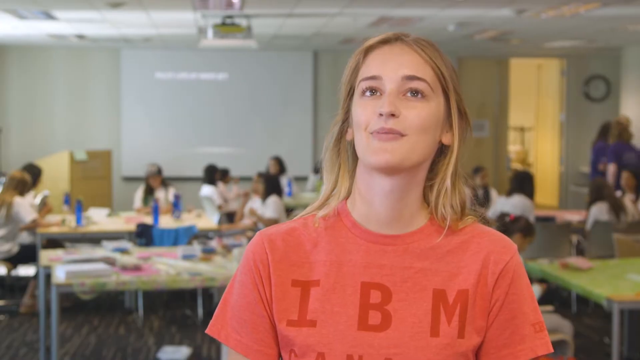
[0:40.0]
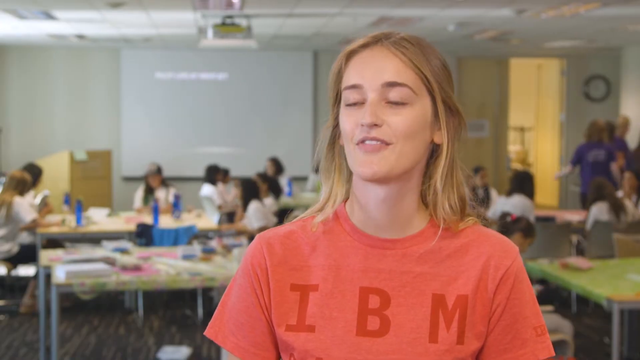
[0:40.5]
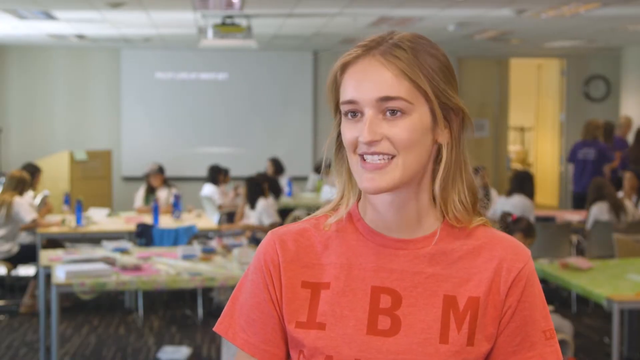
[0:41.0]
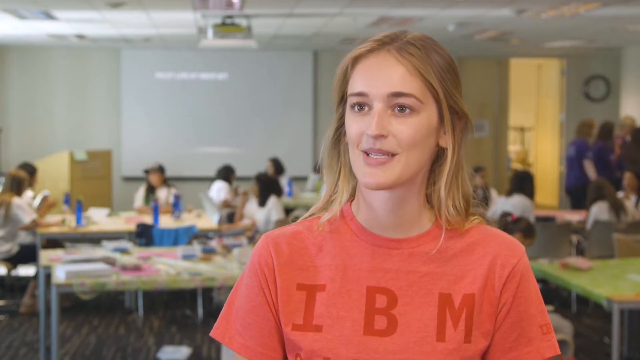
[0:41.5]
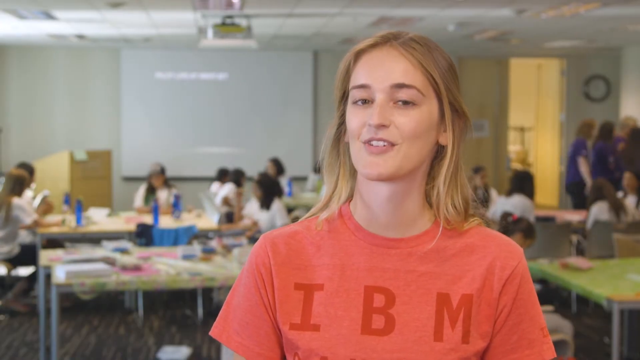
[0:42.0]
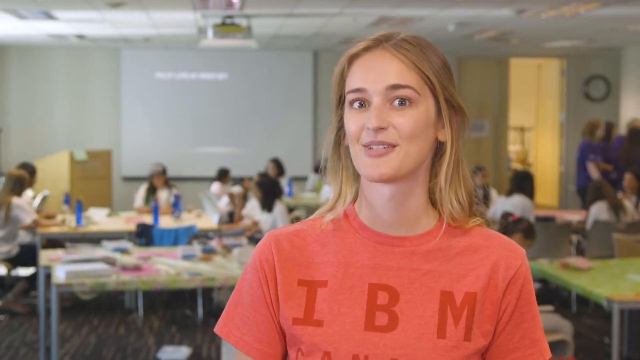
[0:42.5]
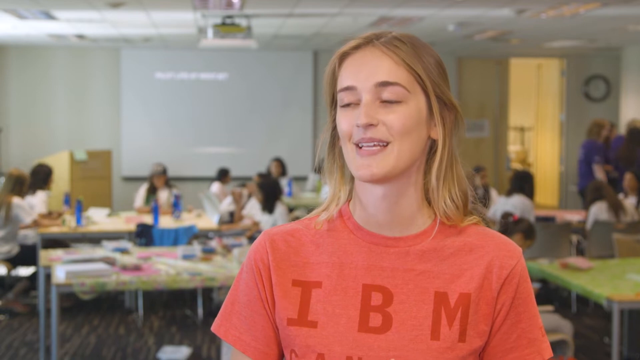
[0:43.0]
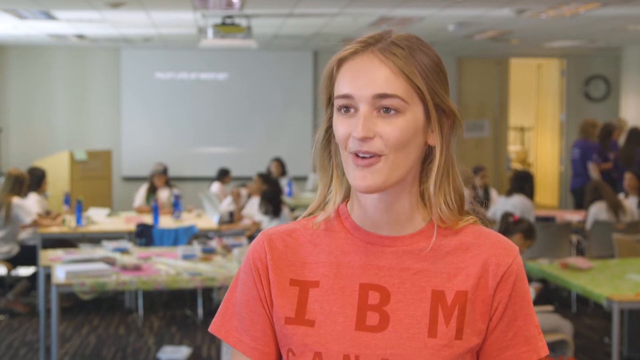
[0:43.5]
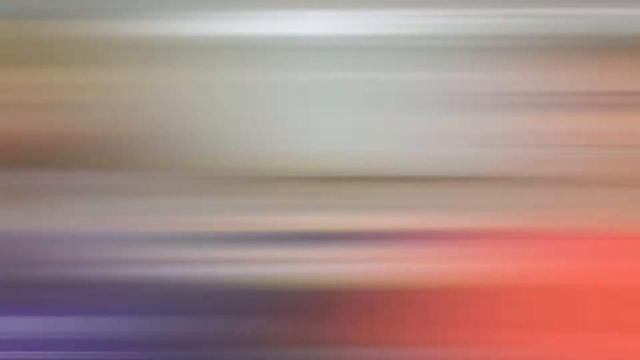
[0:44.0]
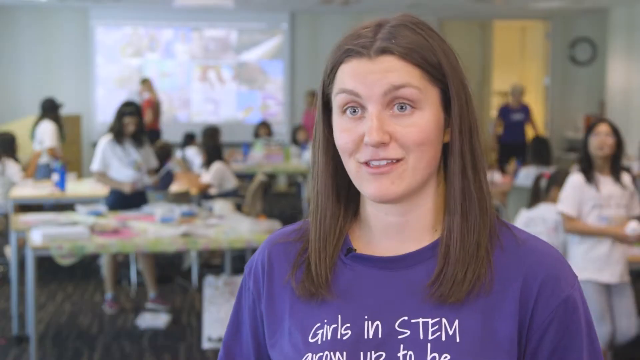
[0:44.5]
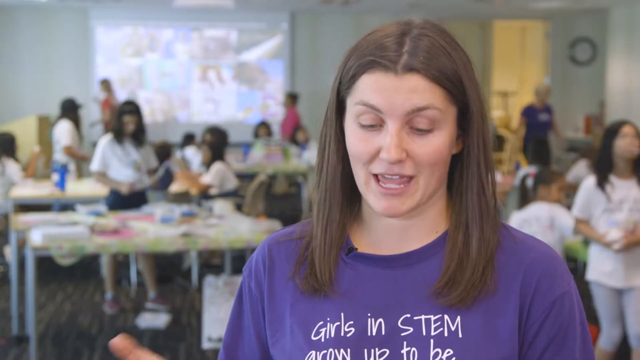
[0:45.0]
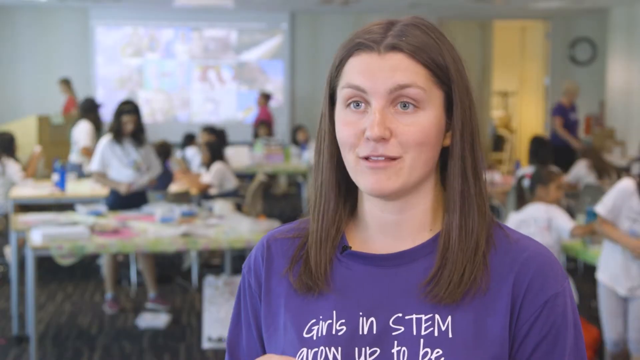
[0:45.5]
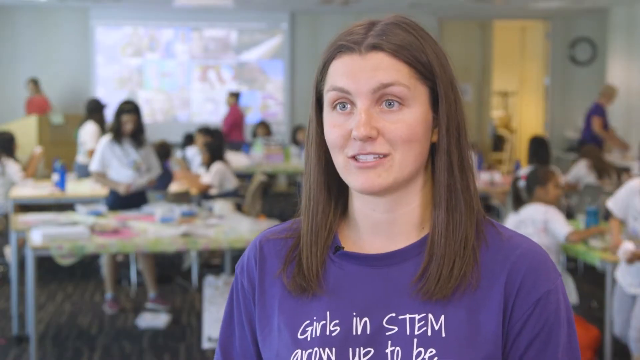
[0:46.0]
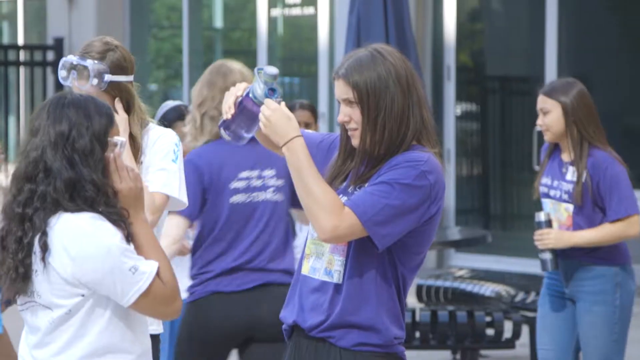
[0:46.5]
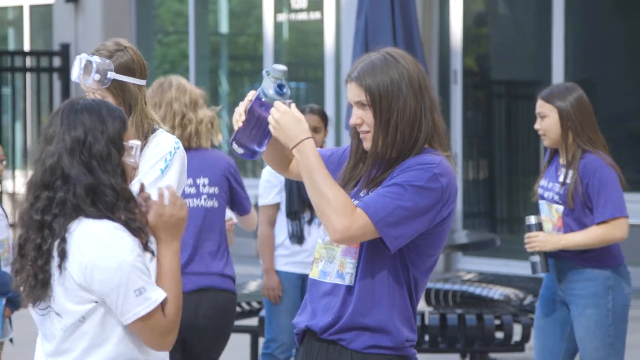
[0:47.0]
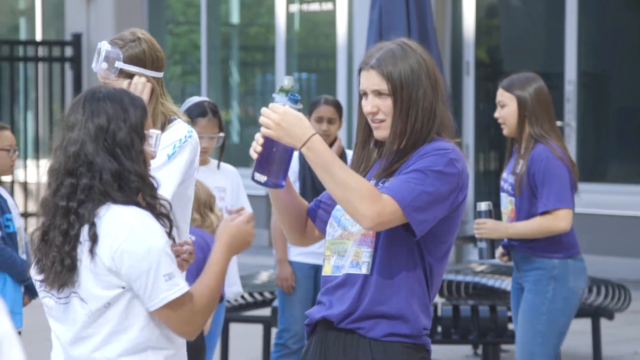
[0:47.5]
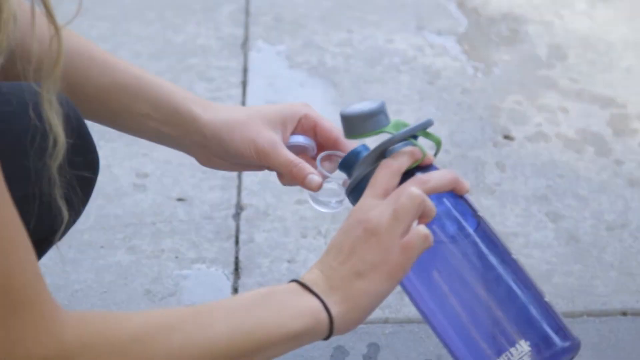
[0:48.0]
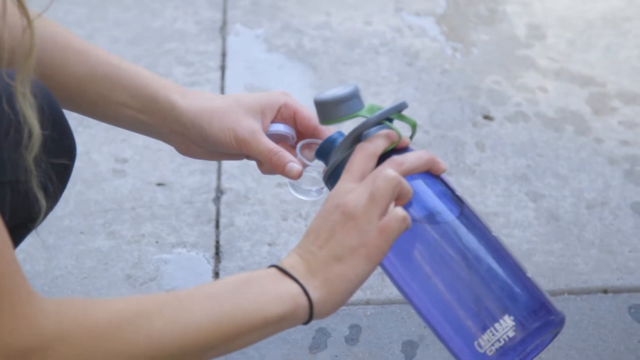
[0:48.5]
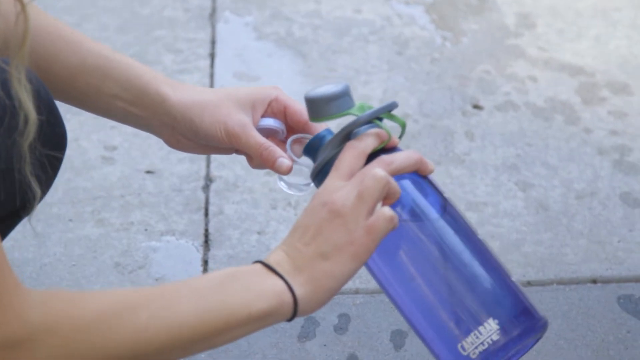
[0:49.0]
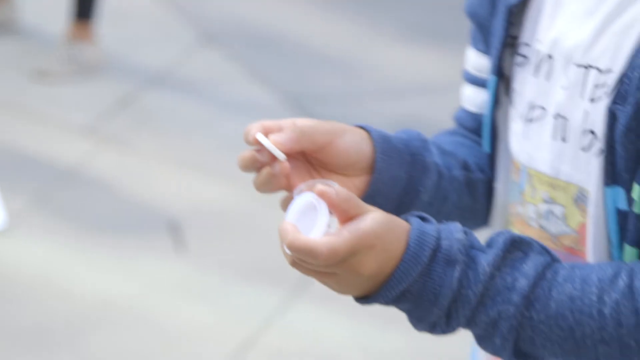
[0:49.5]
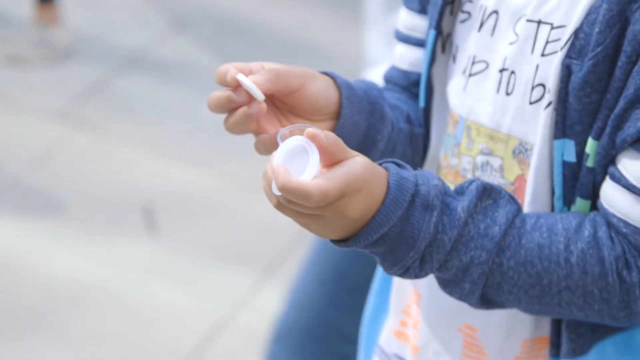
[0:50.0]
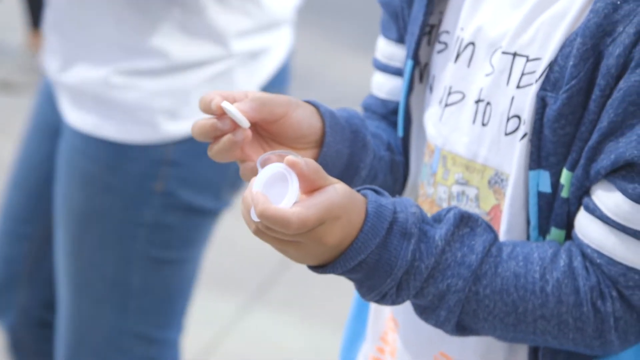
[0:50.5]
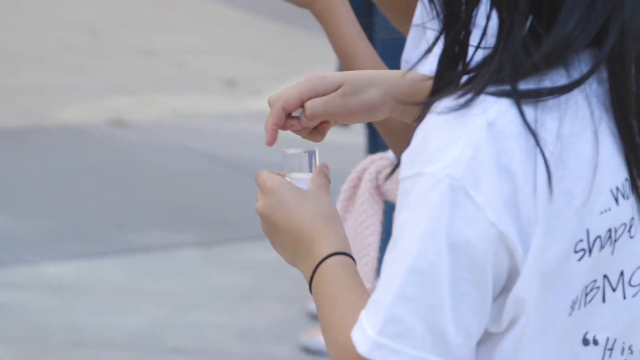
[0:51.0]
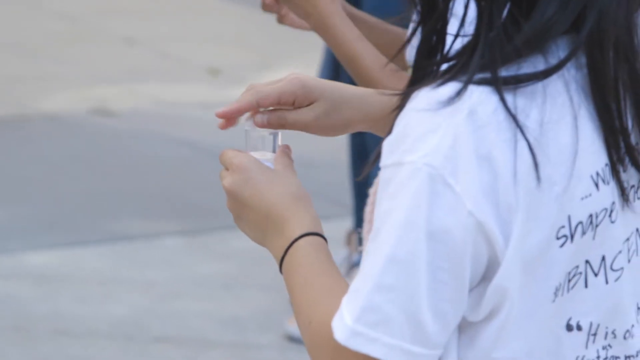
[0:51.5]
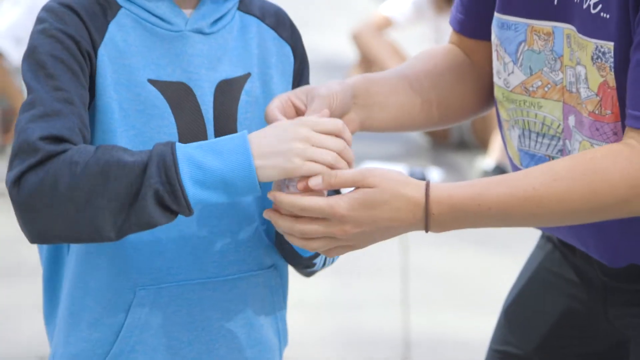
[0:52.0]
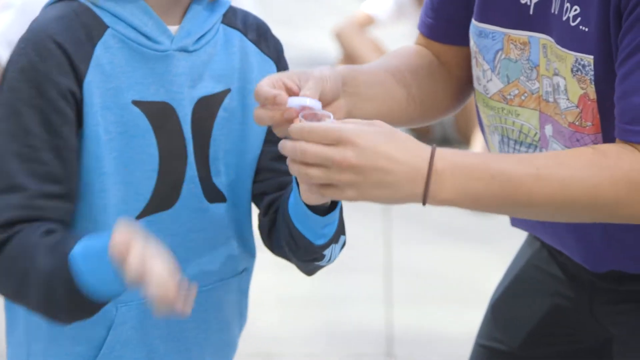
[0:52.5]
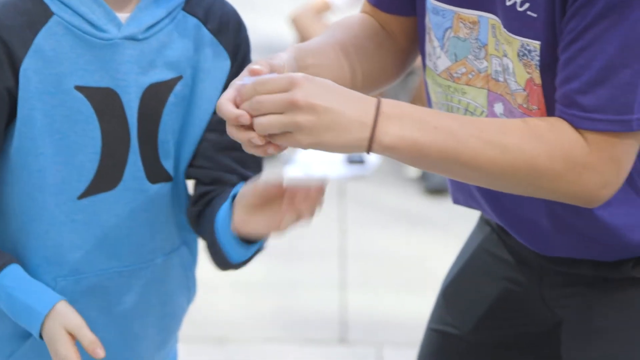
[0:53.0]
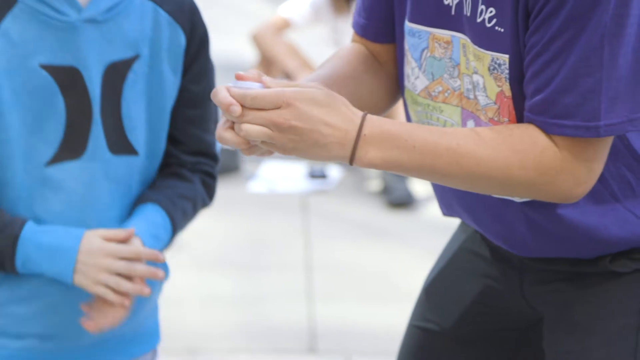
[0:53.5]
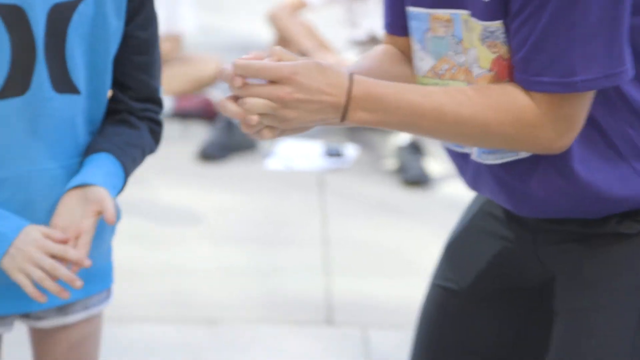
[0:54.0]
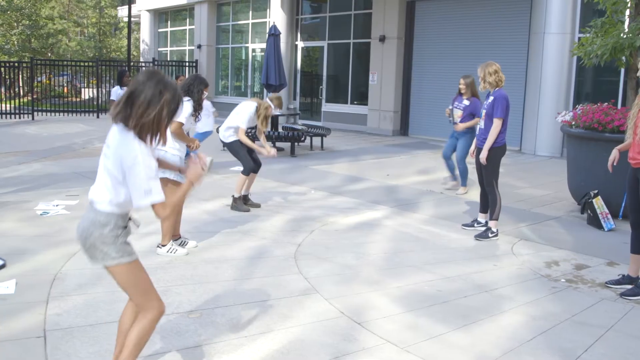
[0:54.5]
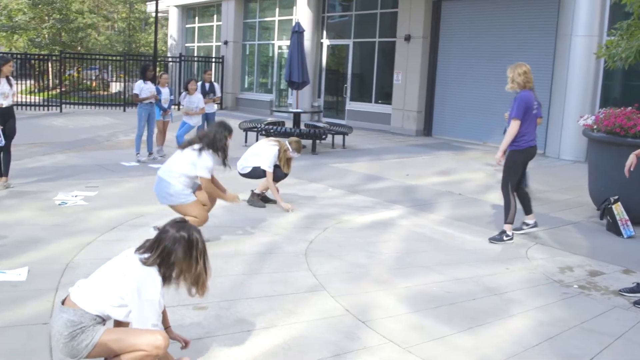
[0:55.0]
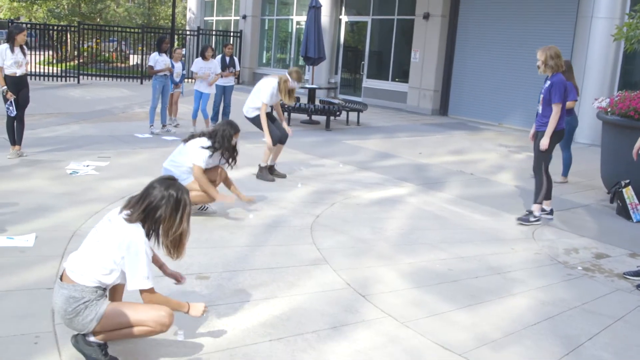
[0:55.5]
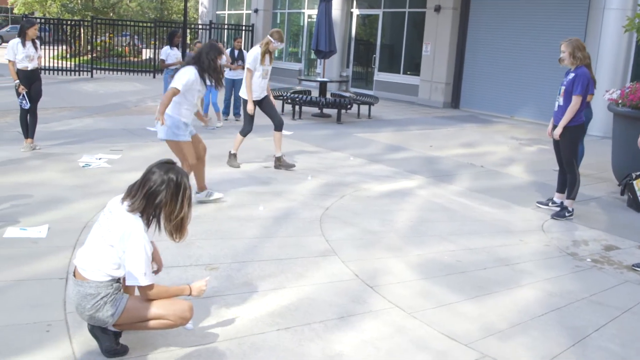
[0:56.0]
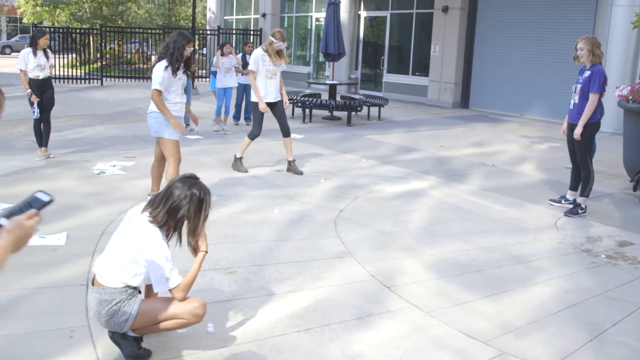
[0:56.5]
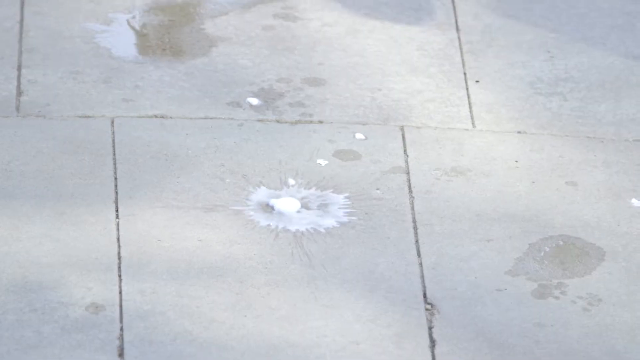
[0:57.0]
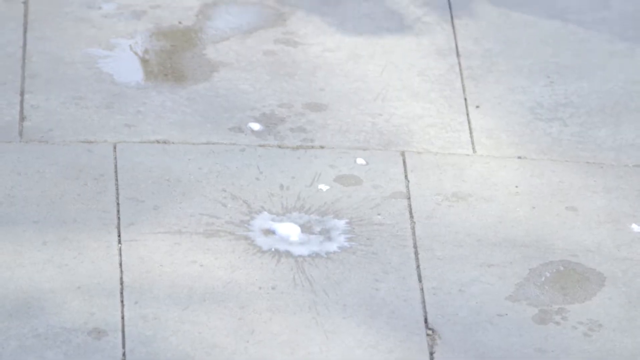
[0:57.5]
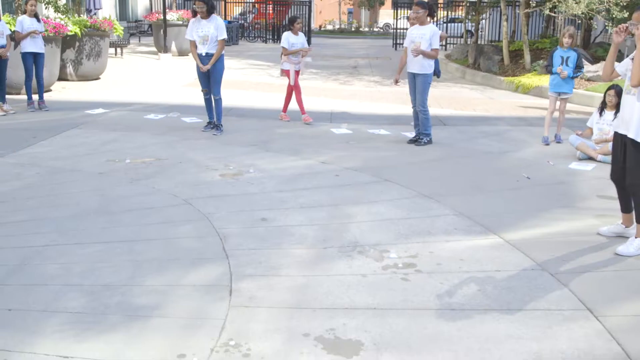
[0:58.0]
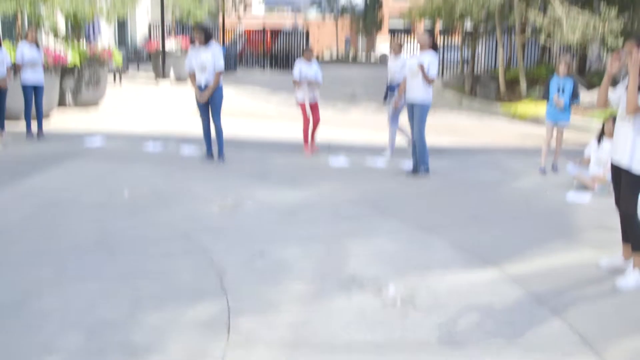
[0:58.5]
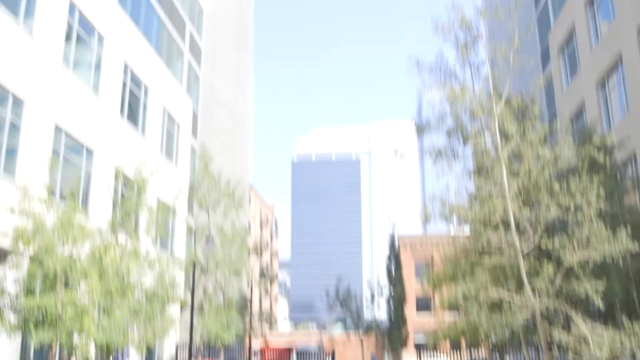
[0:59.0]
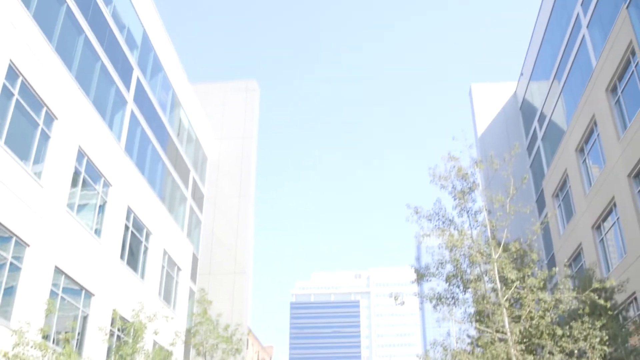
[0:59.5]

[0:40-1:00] The setting is an elementary classroom that serves as a science lab and arts and crafts environment, where students do hands-on lab or arts and crafts work. A white girl with long blonde hair and brown eyes, in a salmon-colored T-shirt that says "IBM," speaks, smiling, happy and enthusiastic. The shot changes to a white girl with long dishwater blonde hair and blue eyes, in the same classroom from a different angle that shows the students. Two others, who appear to be adult teachers, workers or volunteers, are in the room with the children. There are many children and much activity. The girl speaking now pours liquid into other containers. The kids use Alka-Seltzer to make bottle rockets, mixing it with water, shaking the bottles and watching them explode. Outside, the little plastic rockets go up in the air and come back down, and the camera follows them.